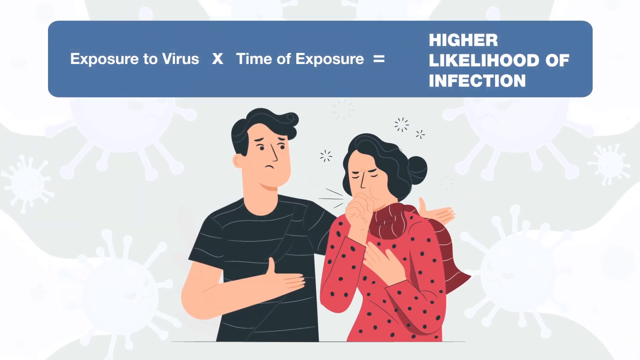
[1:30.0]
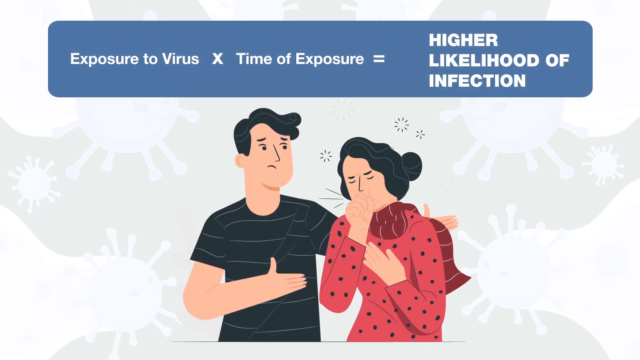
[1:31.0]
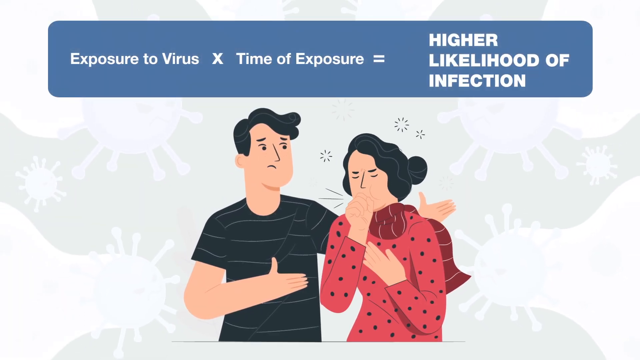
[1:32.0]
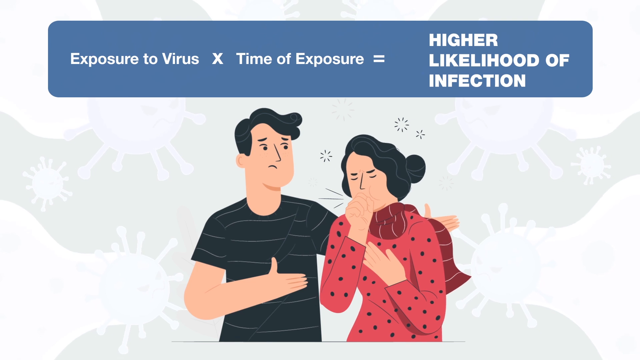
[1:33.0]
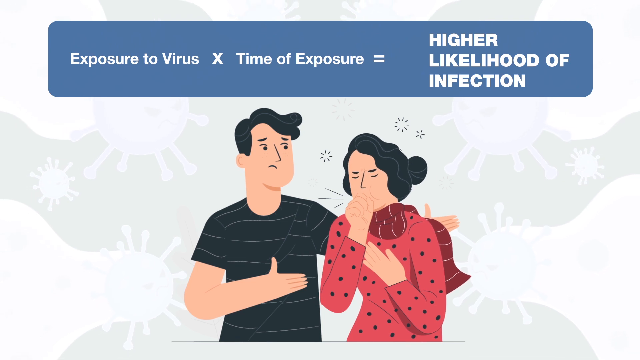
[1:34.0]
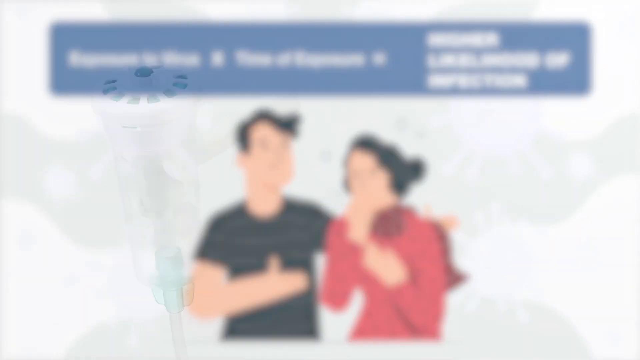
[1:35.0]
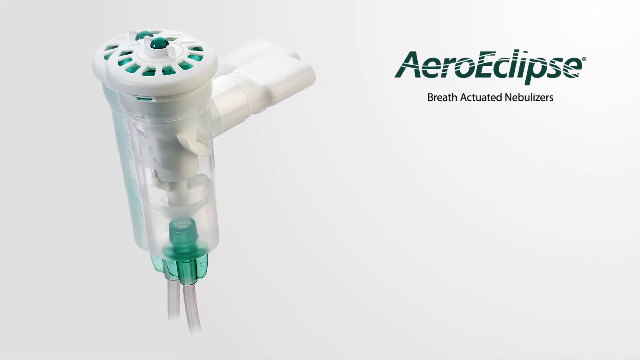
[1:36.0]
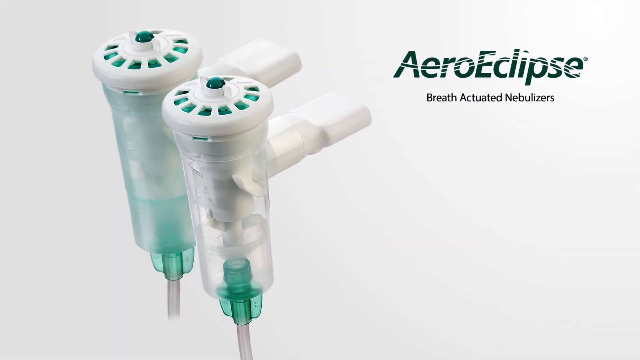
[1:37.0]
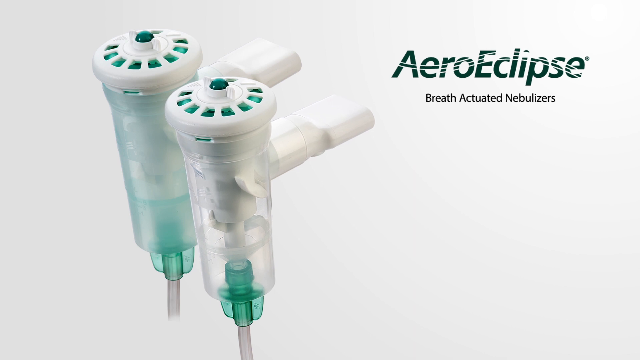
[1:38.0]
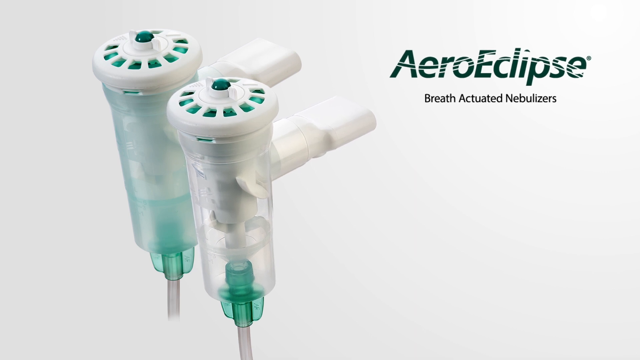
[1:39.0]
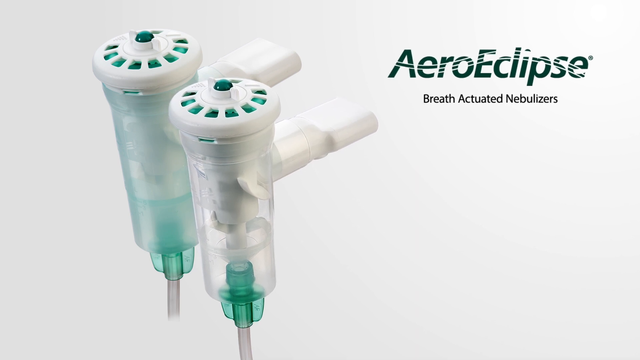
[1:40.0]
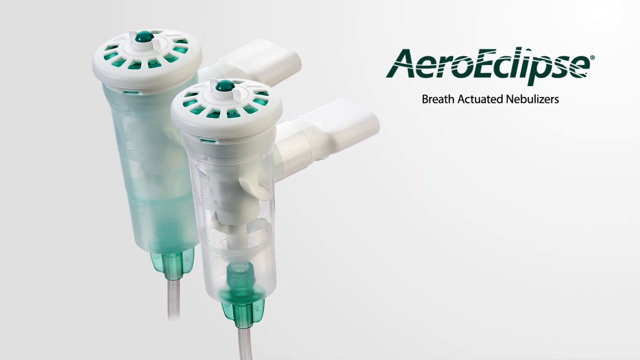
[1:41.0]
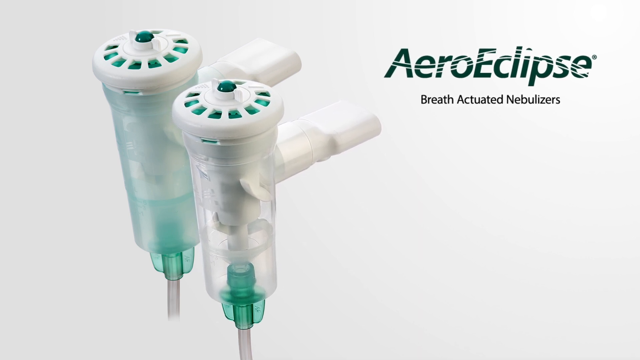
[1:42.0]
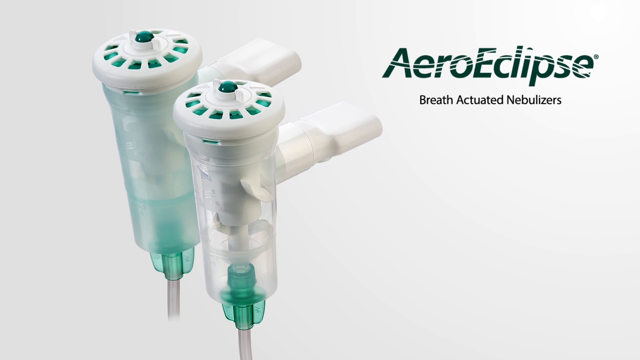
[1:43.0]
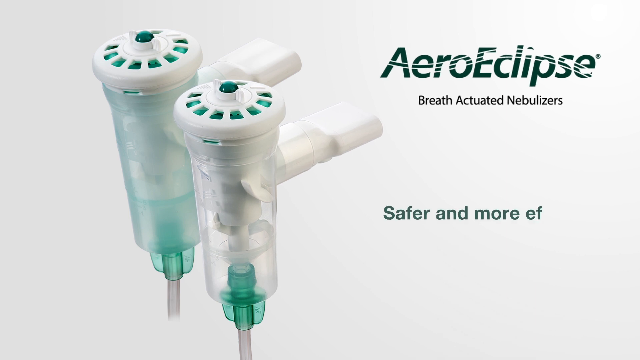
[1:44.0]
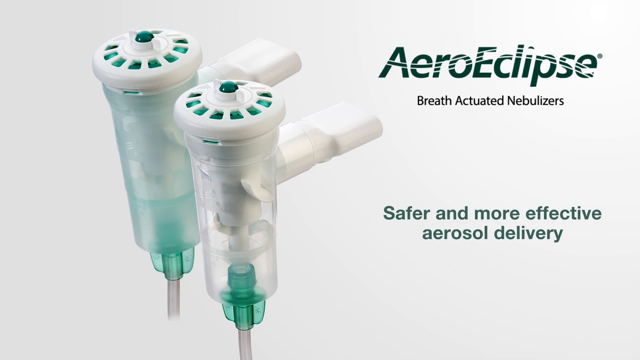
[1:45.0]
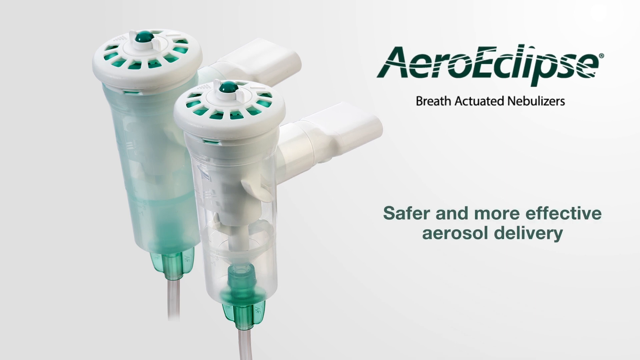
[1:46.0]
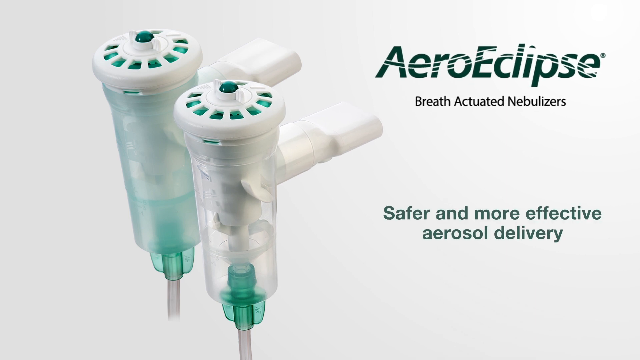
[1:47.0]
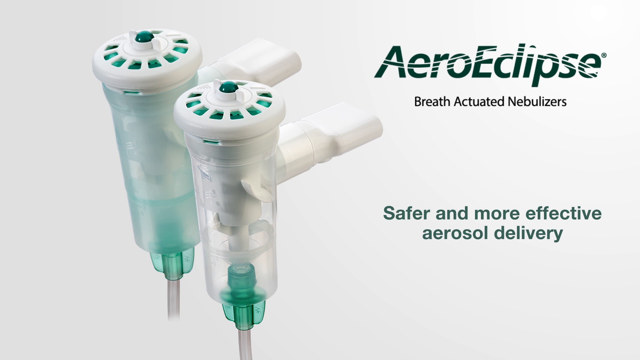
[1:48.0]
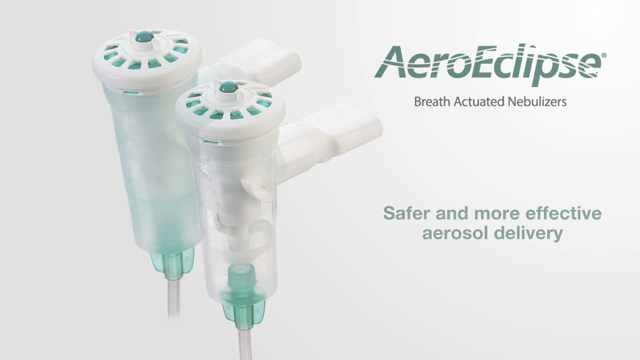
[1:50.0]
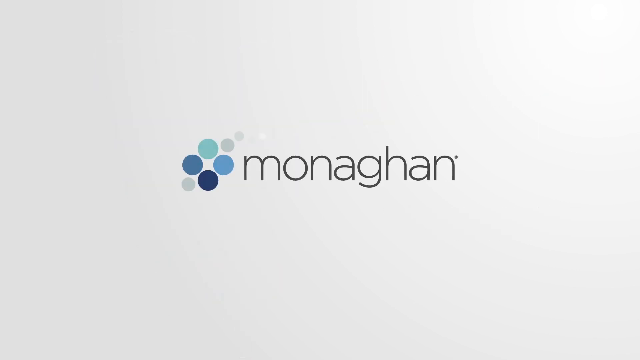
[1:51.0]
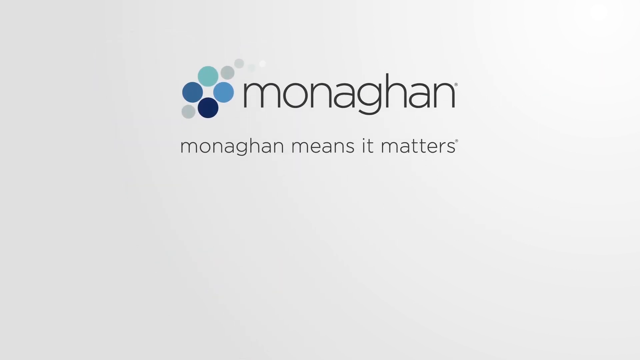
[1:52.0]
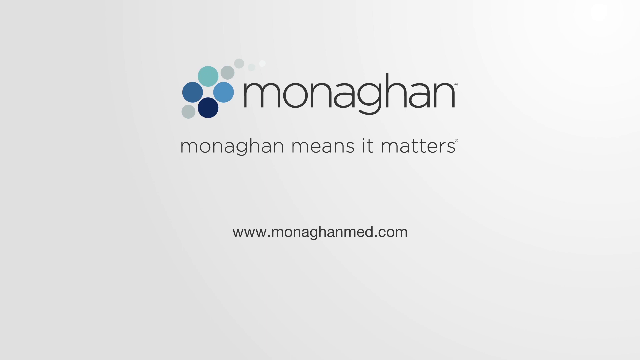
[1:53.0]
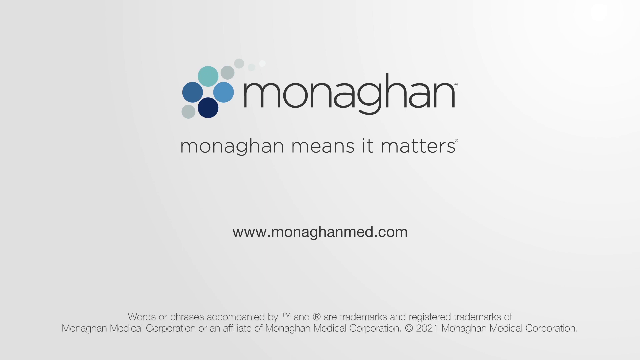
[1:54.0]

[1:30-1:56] The higher likelihood of infection graphic with the woman coughing is on screen, along with a picture of the Arrow Eclipse breath-actuated nebulizers. The text says "Safer and more effective aerosol delivery". Then "Monaghan means it matters" and "www.monaghanmed.com" appear with the Monaghan logo, which is made of light green, light blue, darker Wedgwood blue, and a black circle with two darker gray circles and one very light gray circle. This part of the video has a white background.